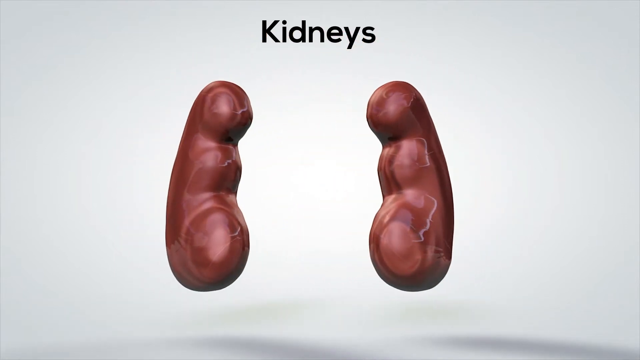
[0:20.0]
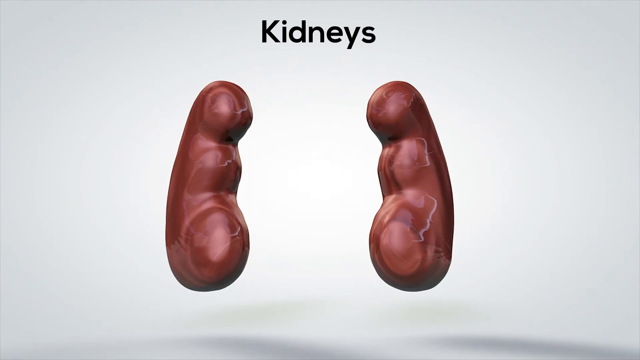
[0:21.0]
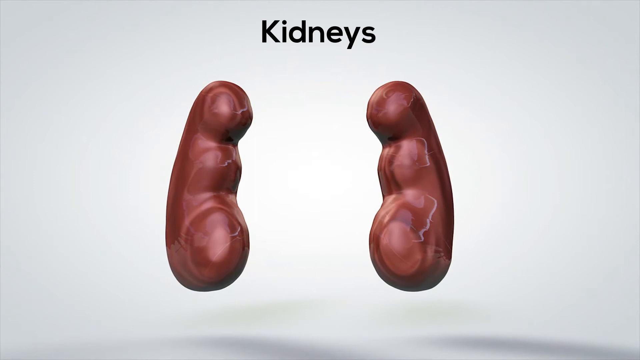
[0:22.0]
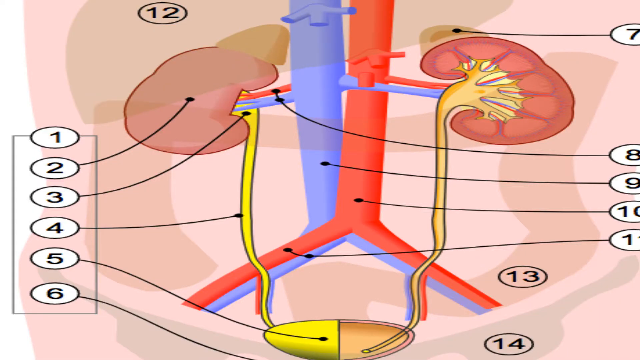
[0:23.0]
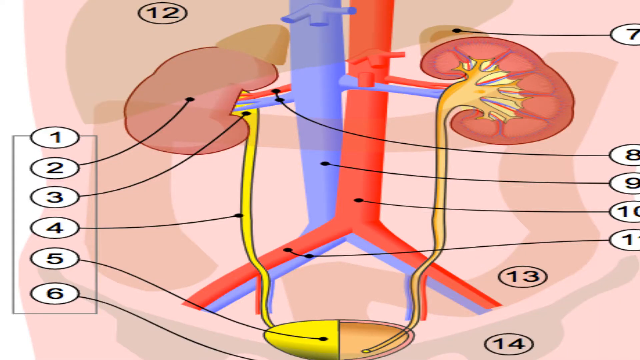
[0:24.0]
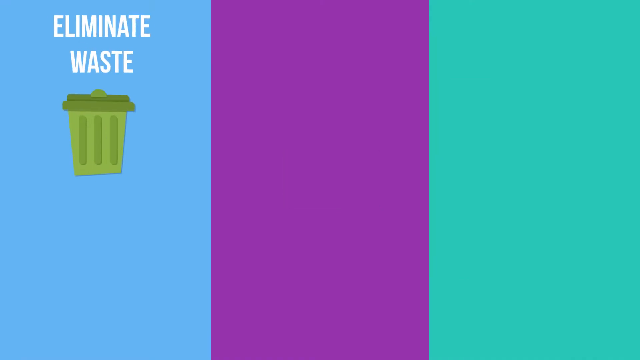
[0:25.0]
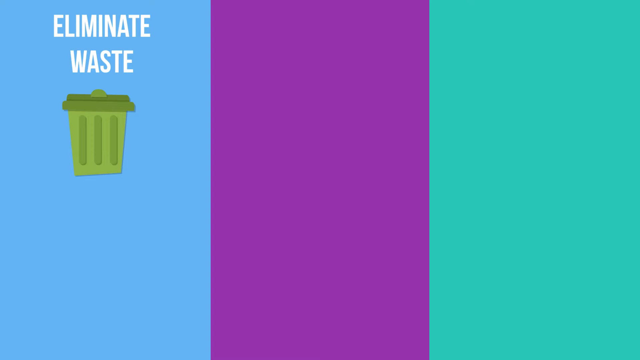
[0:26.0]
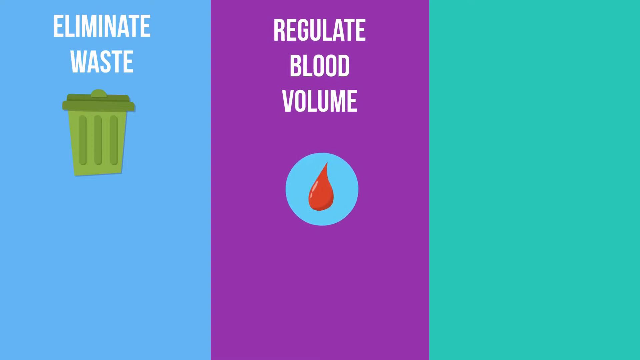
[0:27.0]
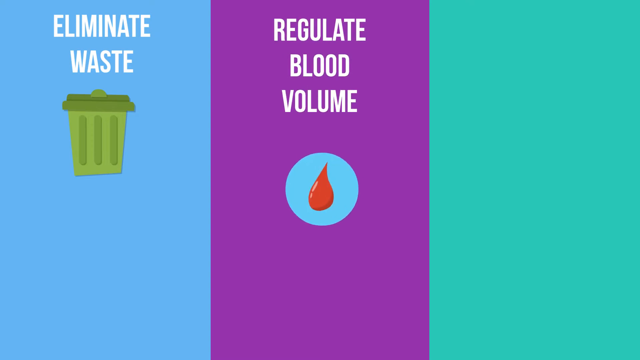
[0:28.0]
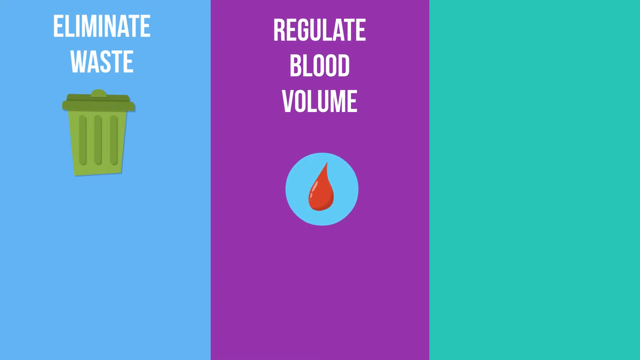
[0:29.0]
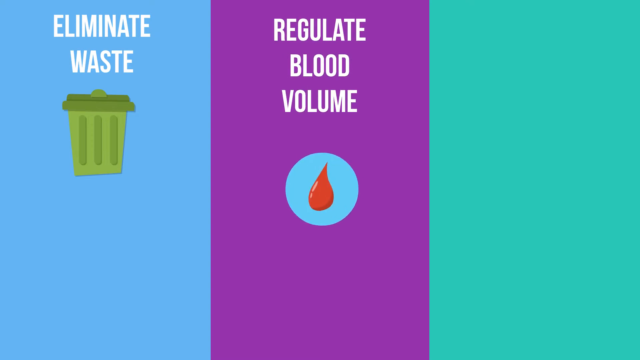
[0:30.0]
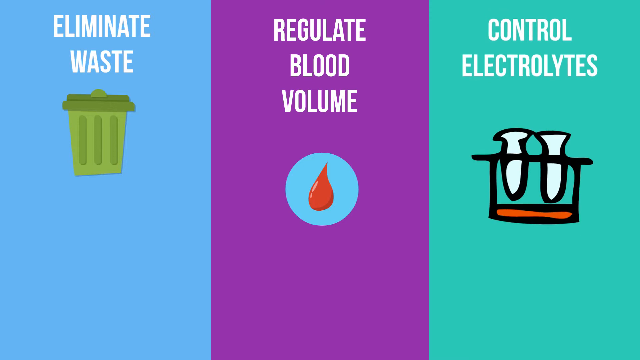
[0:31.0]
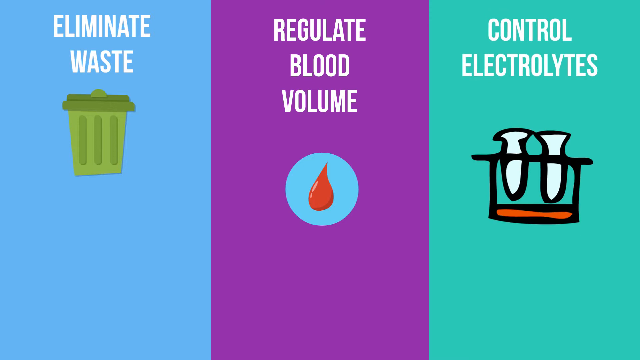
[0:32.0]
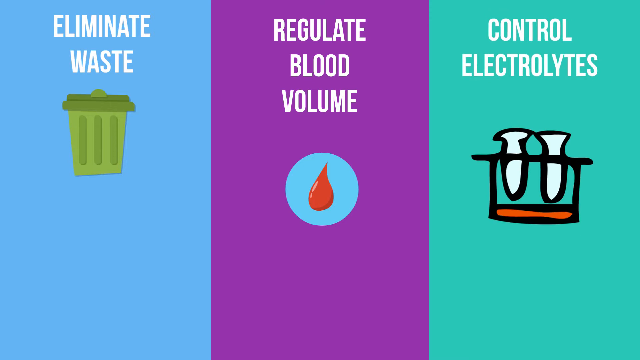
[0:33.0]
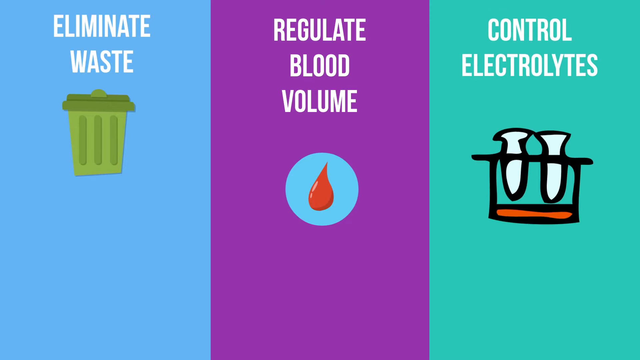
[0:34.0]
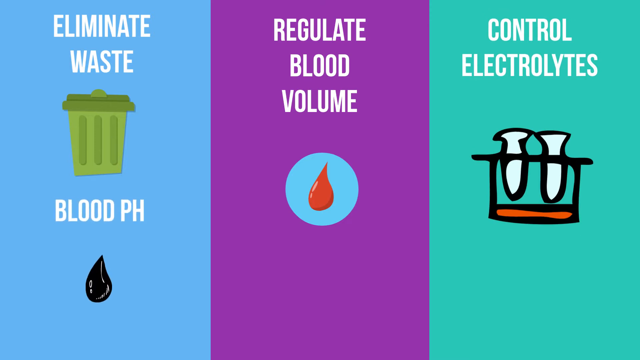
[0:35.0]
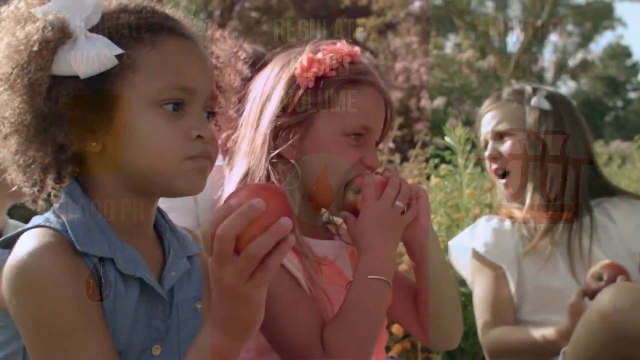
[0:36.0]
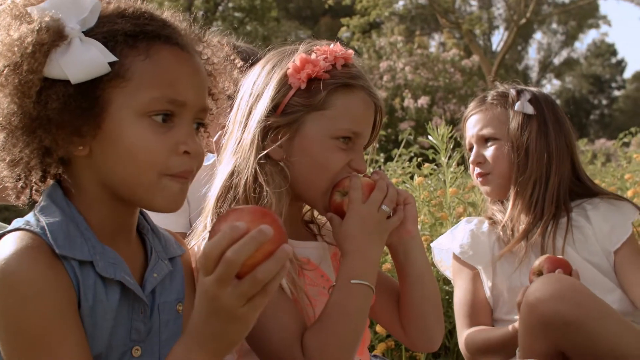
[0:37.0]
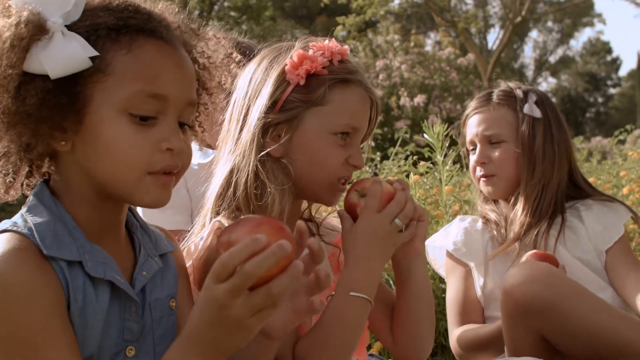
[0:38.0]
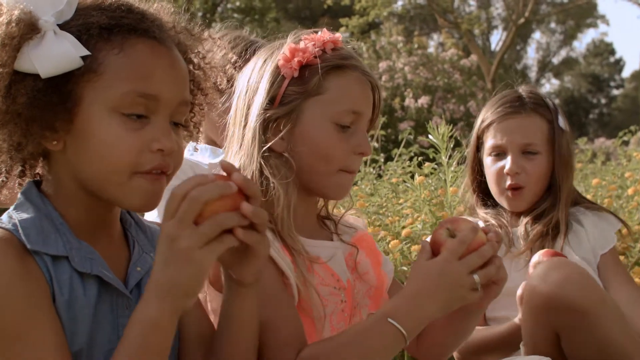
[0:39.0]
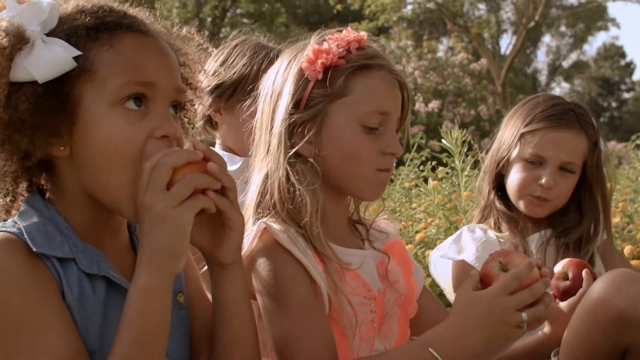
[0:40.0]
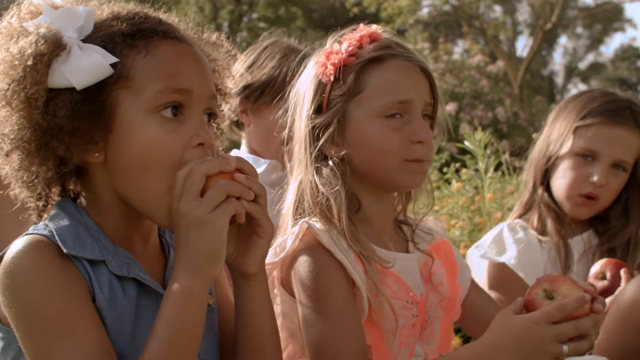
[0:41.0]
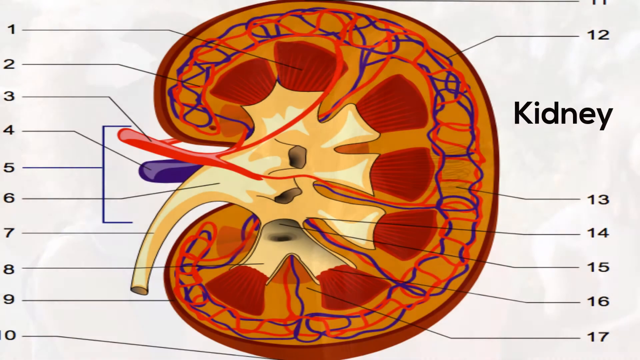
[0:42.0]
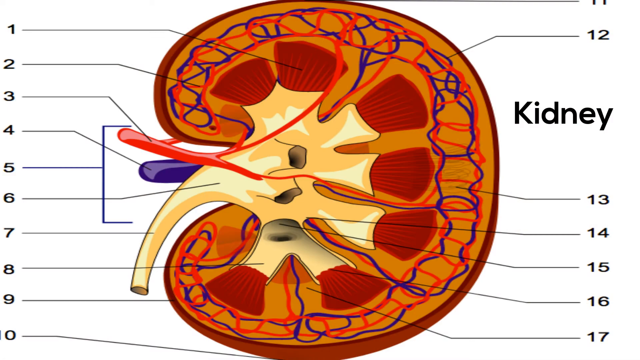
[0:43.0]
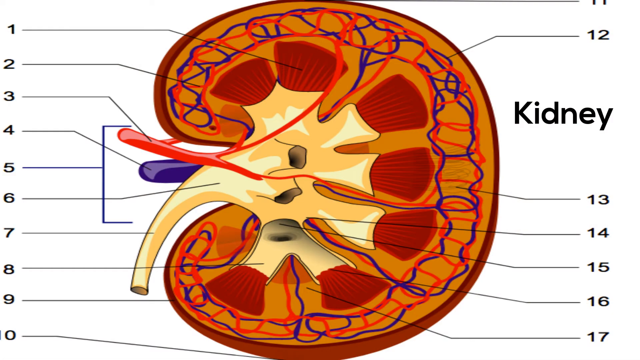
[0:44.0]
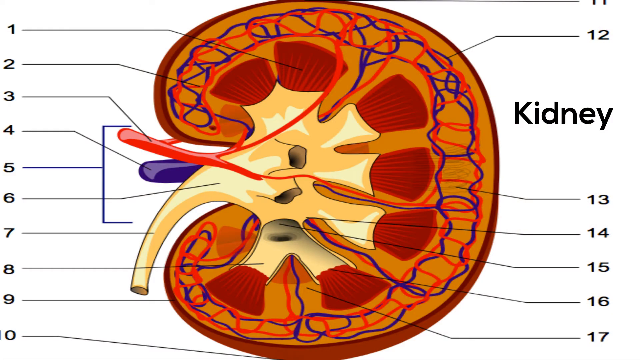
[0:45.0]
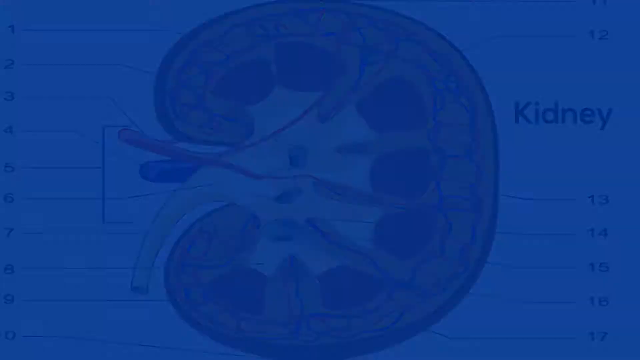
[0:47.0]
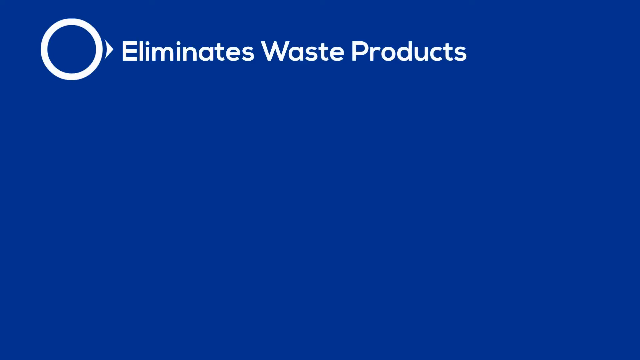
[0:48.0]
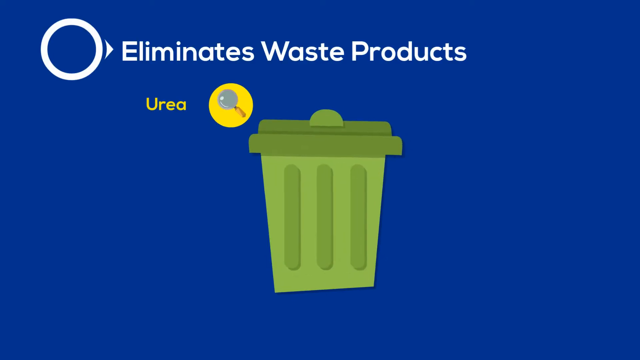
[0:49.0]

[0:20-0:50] The urinary system diagram is displayed, and pop-ups appear on the screen in different colours: blue, purple and turquoise. The blue one is labelled "eliminate waste" and has a picture of a bin. The next is "regulate blood volume" with a picture of a drop of blood, and the next is "control electrolytes" with a picture of two electrolytes. The video then moves to three little girls eating apples, all of them with accessories in their hair. It then returns to a kidney, which looks like it has been cut in half or opened, showing the inside of the kidney and exposing the different arteries. On the left side it says "kidneys", and the kidney's parts are labelled from 1 to 17.